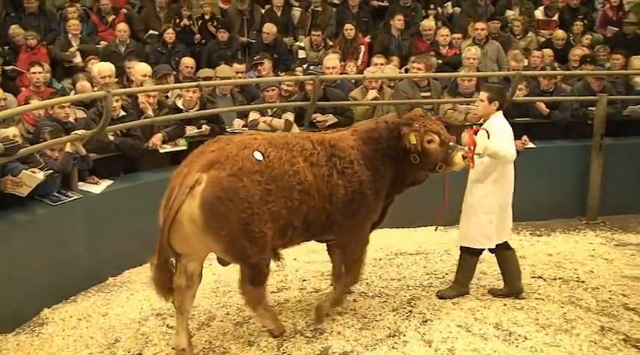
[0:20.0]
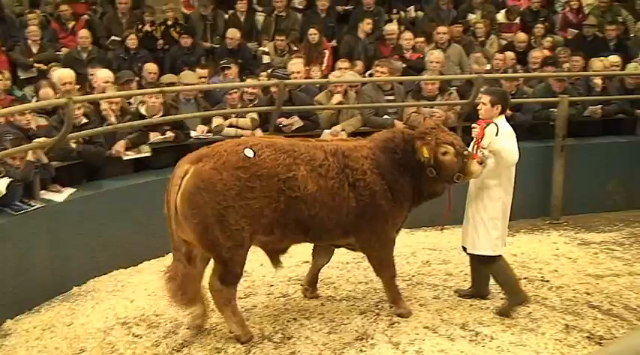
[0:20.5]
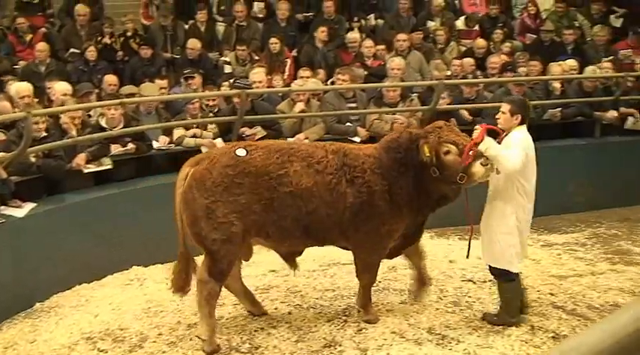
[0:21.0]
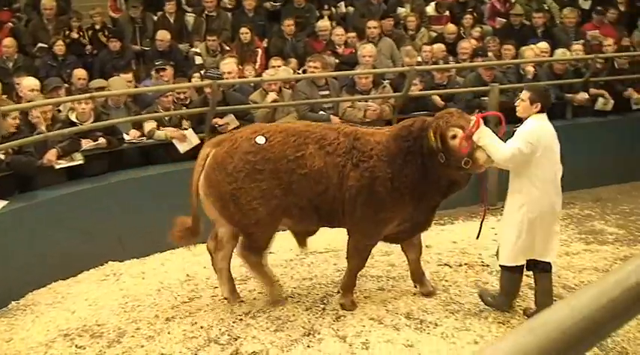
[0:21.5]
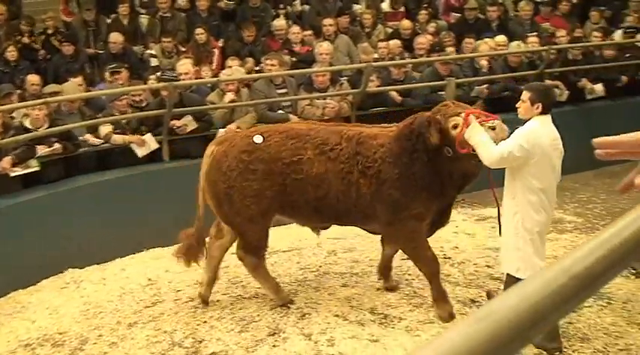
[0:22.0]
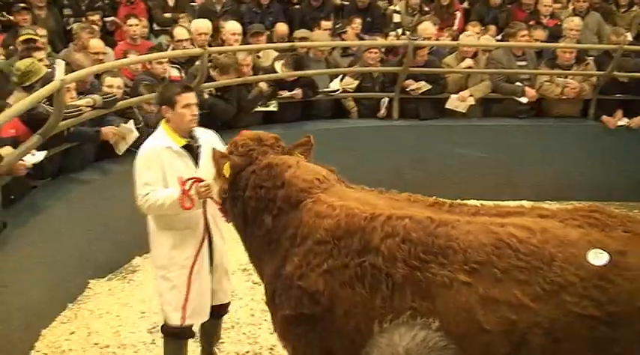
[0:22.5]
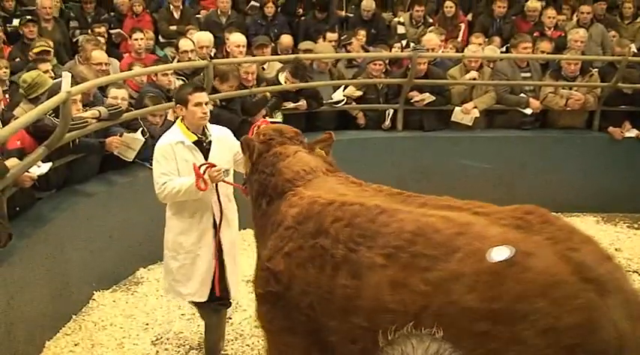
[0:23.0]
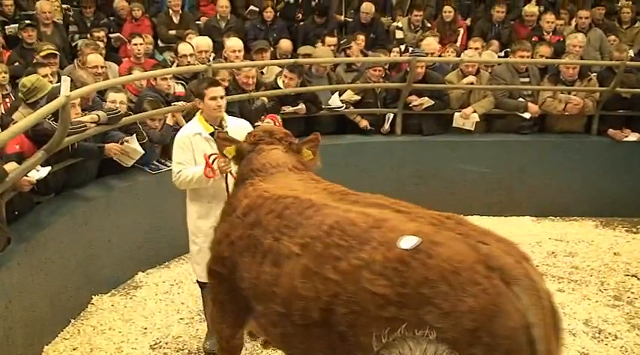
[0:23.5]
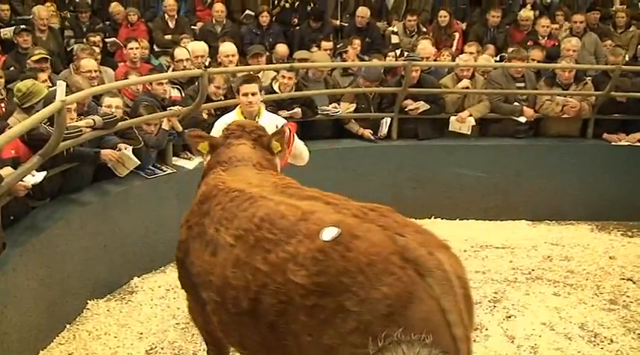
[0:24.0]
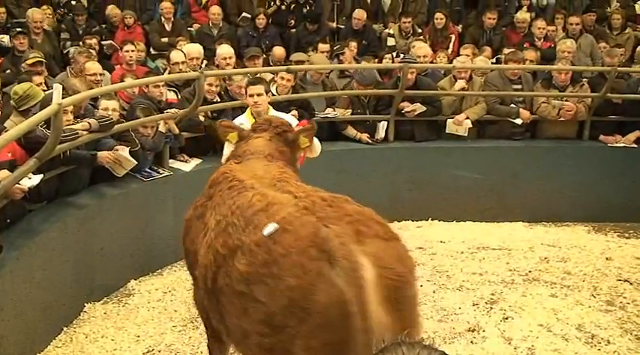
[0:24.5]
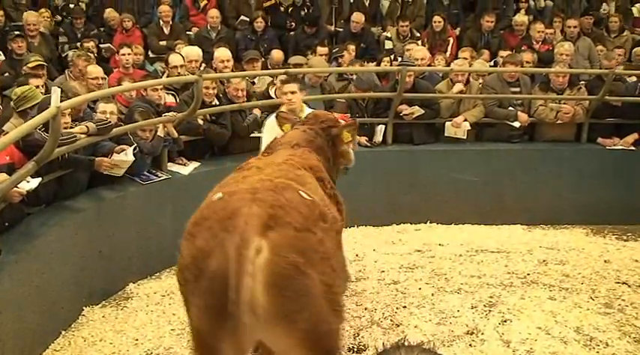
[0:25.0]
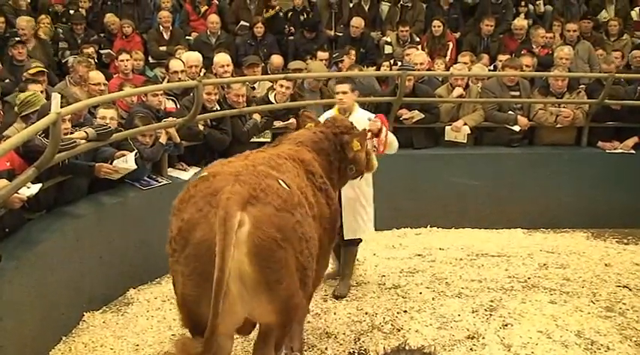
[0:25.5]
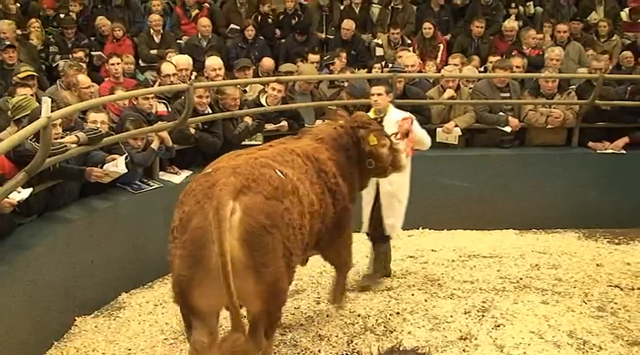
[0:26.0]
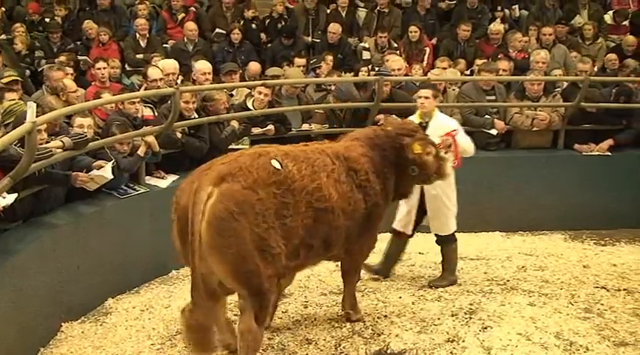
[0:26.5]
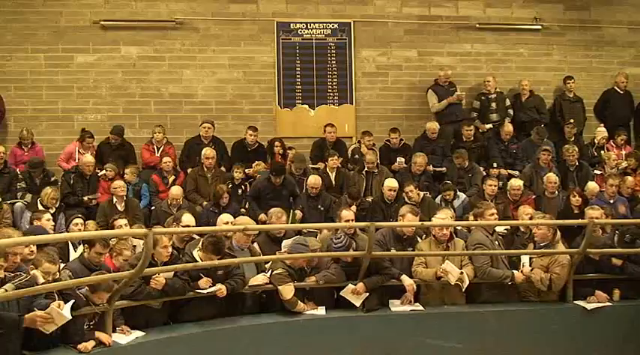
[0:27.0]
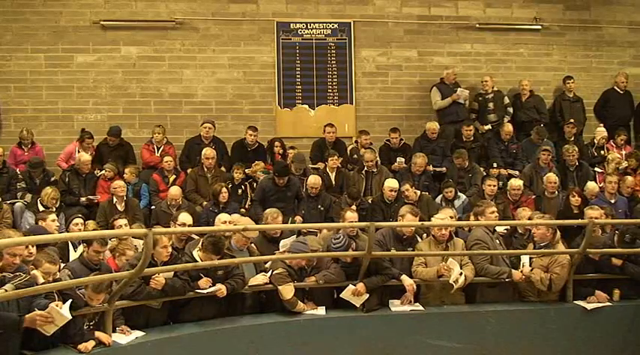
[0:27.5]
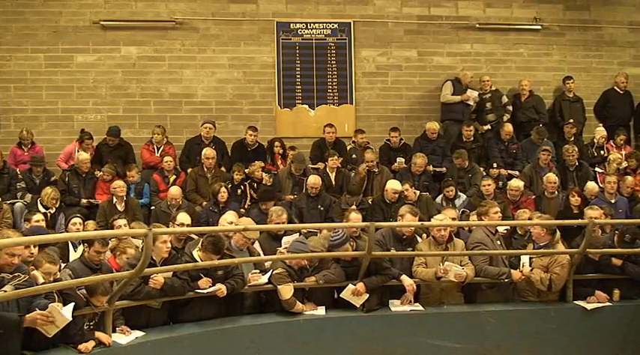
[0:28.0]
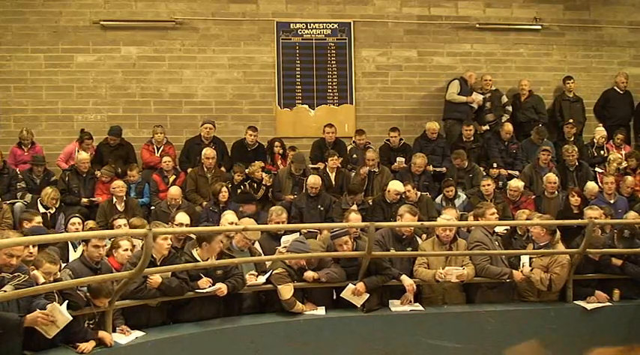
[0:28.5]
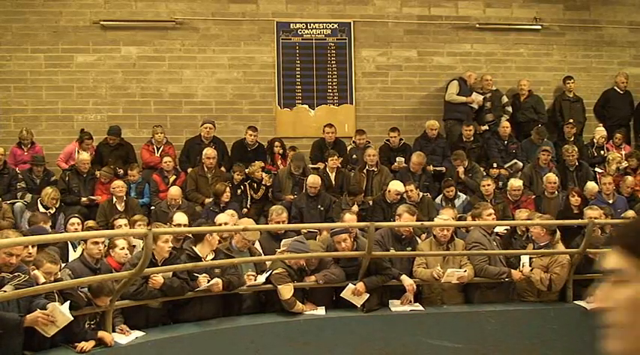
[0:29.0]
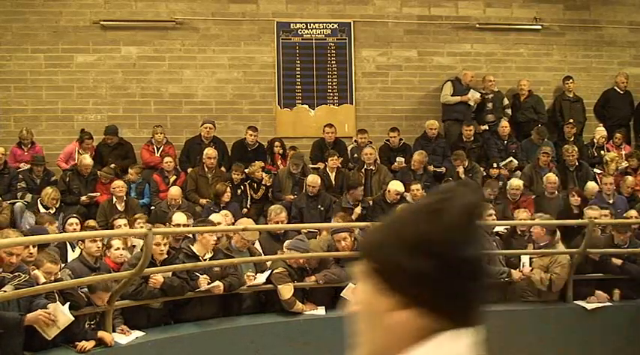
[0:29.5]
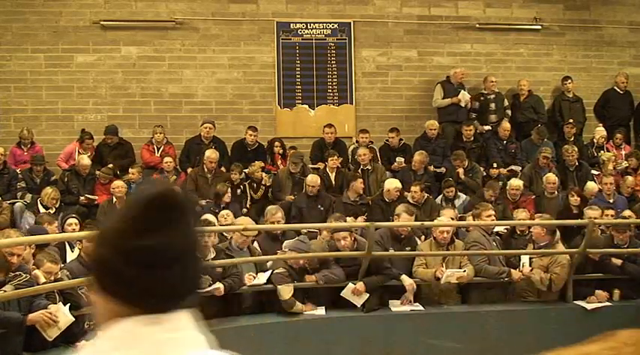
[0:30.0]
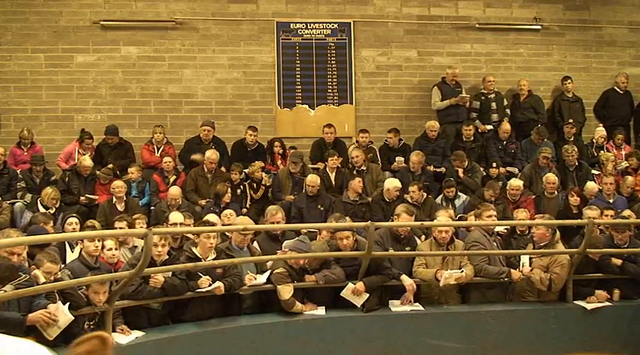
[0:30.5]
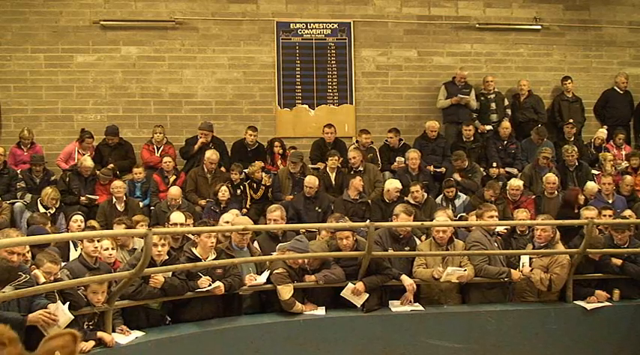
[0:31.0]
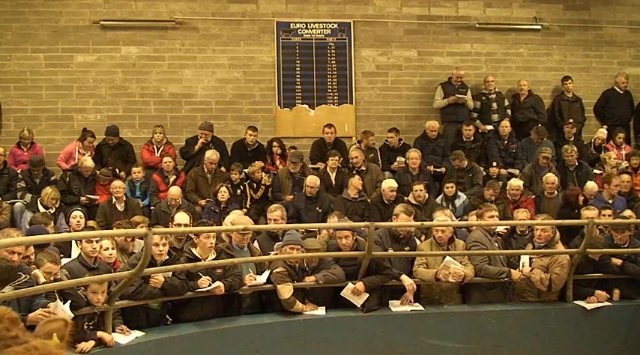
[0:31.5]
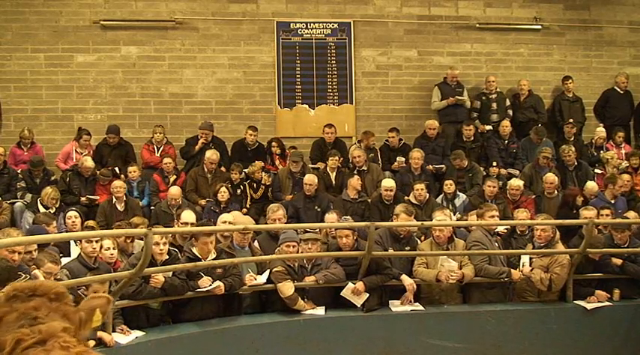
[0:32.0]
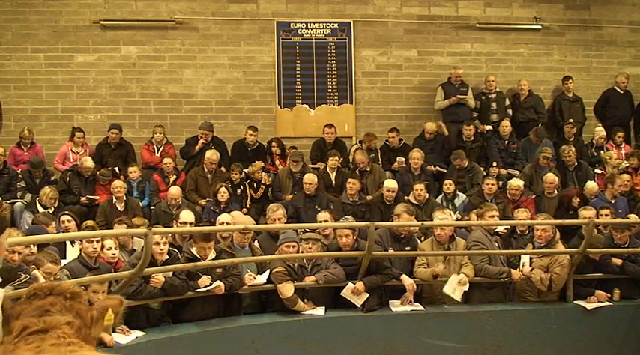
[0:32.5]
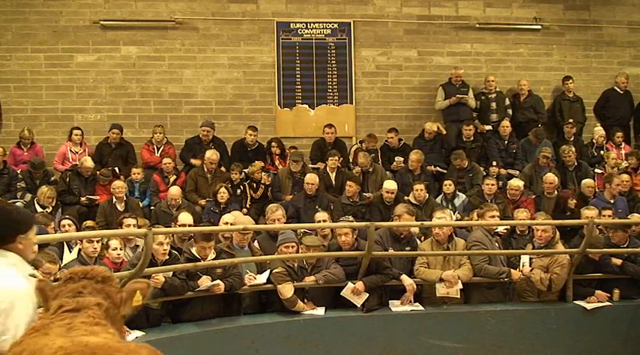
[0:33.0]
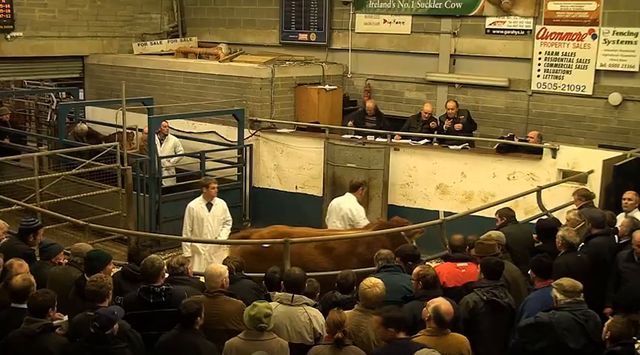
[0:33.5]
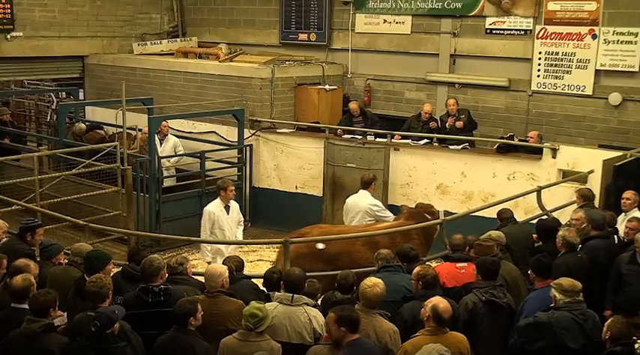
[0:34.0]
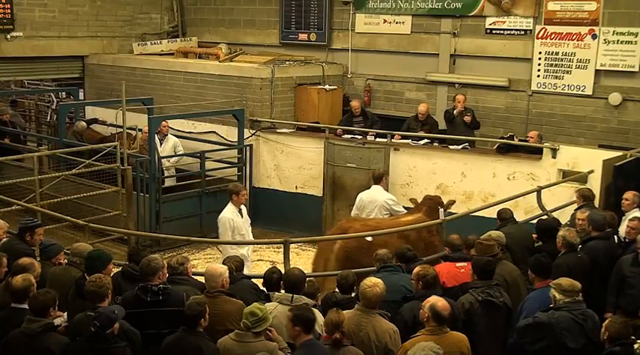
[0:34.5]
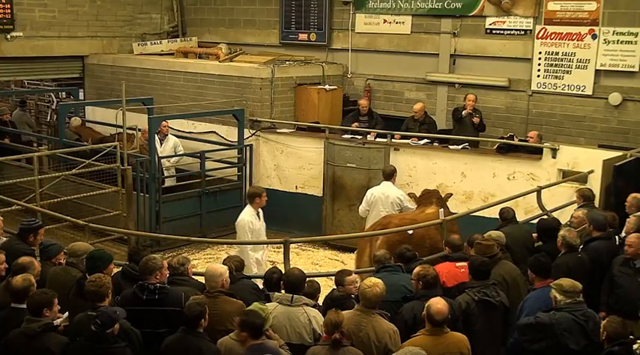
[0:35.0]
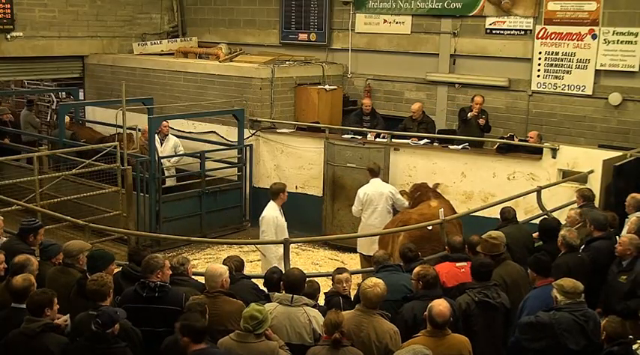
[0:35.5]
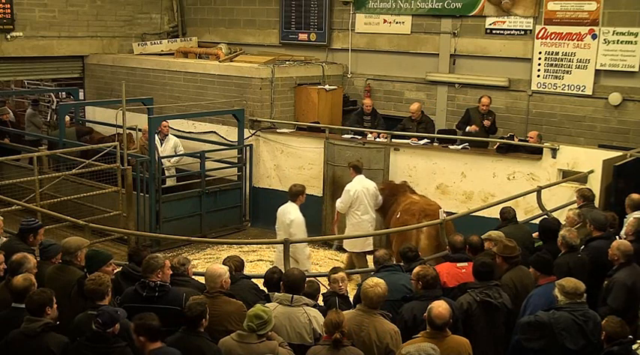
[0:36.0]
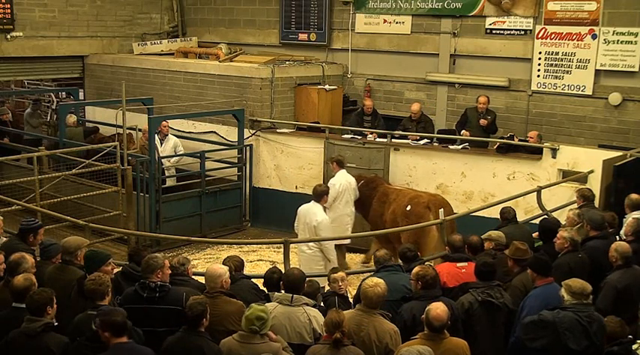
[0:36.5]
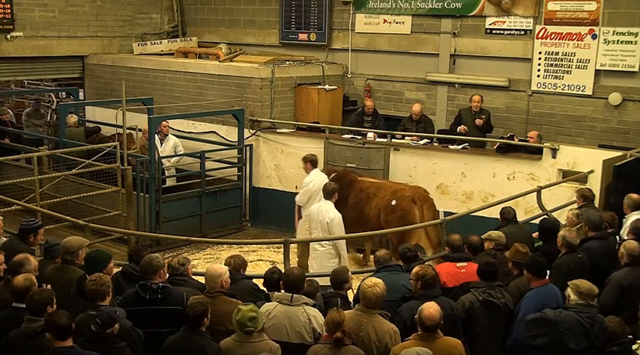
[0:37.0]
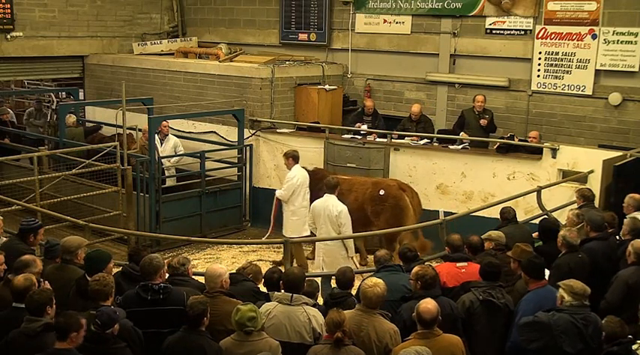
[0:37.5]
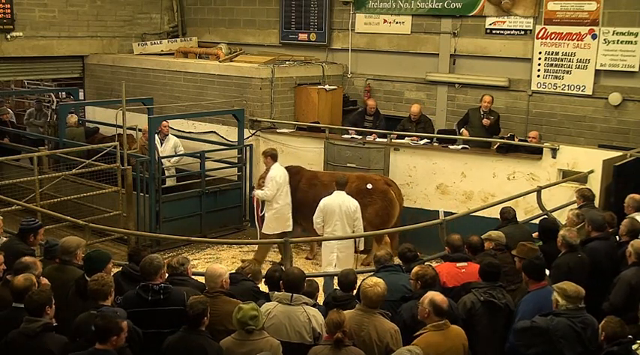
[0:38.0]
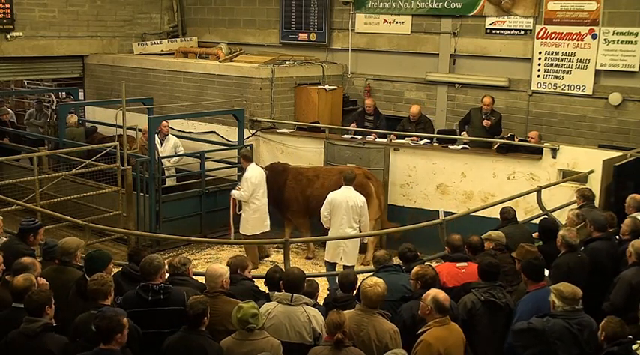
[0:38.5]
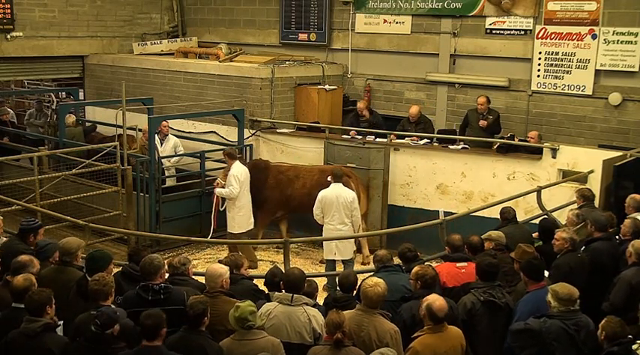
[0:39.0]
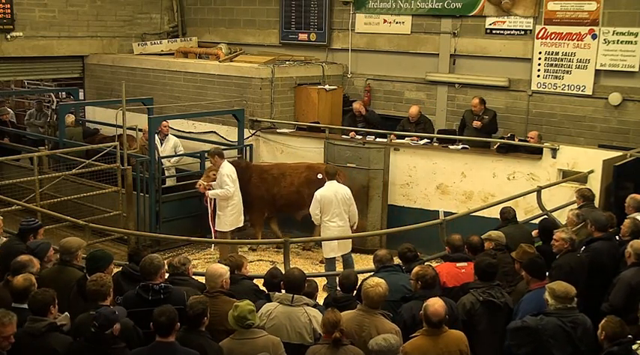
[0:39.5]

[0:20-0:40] In an arena or circular area, a gentleman in a white coat leads a cow around. The camera pans around to the audience, which is very large. Many of the people hold paper in their hands and appear to be taking notes, and they are clearly watching what is going on in the pen. A group of people is up above the pen, and one of them talks into a microphone; he appears to be an auctioneer. The cow has a couple of white markings on its back. They do not look like a brand or like stickers; they look like something that has been pushed into the cow, though what they are is unclear. The man walks the cow around in circles so that everybody can see it. Behind them, the building has a cinder block wall.